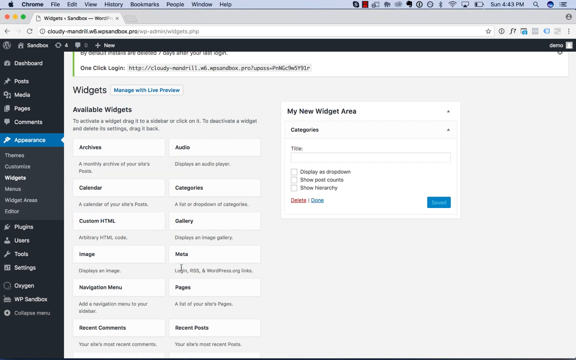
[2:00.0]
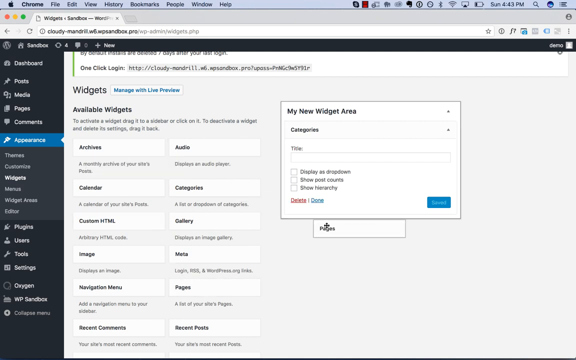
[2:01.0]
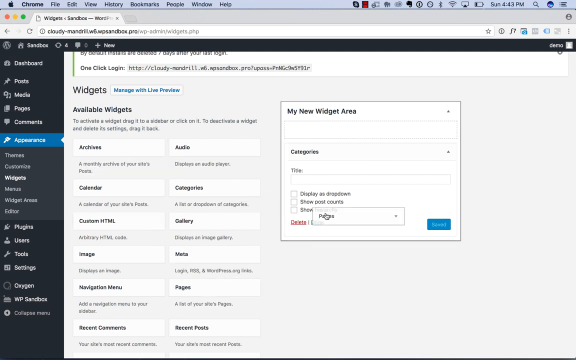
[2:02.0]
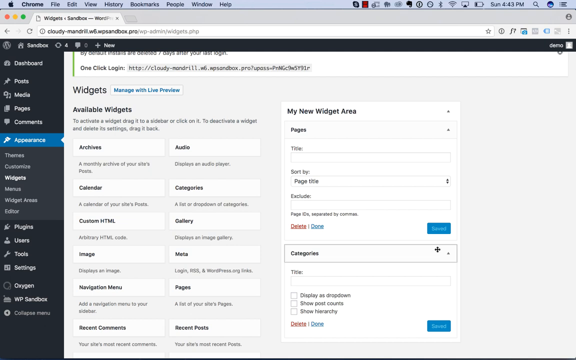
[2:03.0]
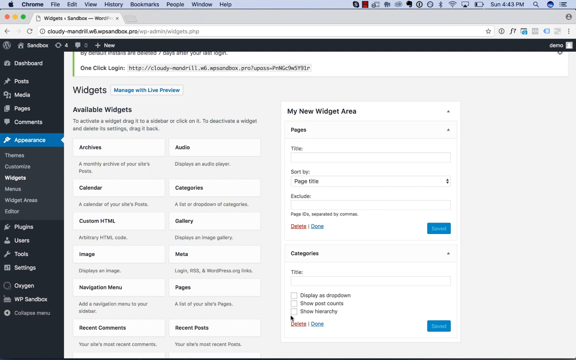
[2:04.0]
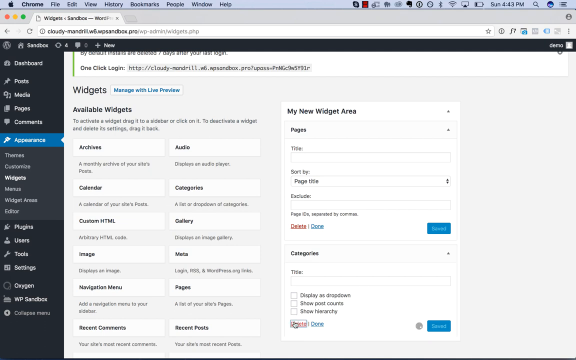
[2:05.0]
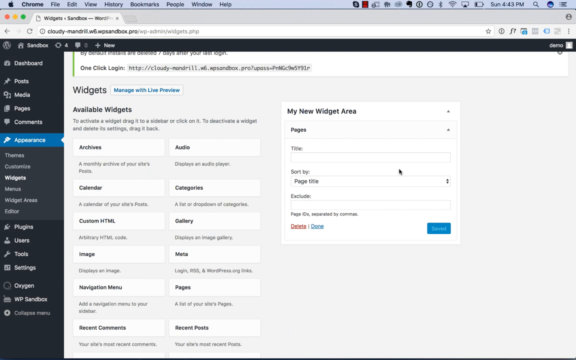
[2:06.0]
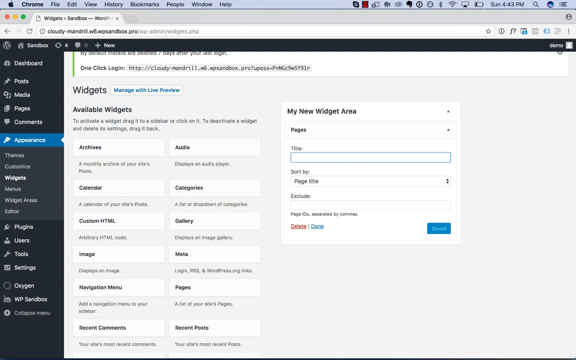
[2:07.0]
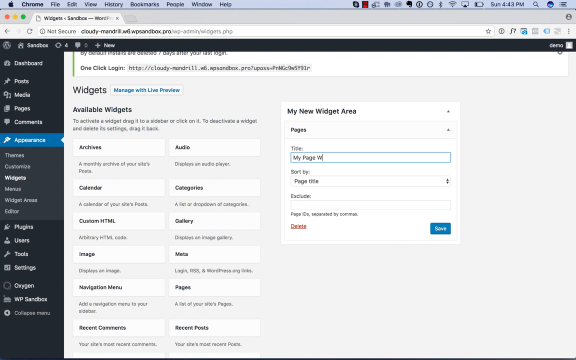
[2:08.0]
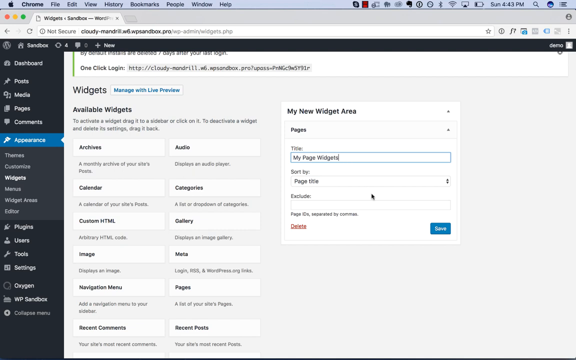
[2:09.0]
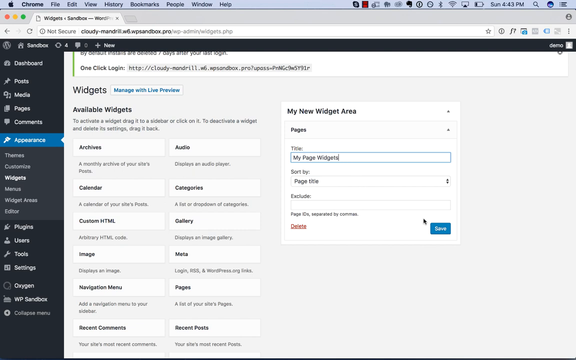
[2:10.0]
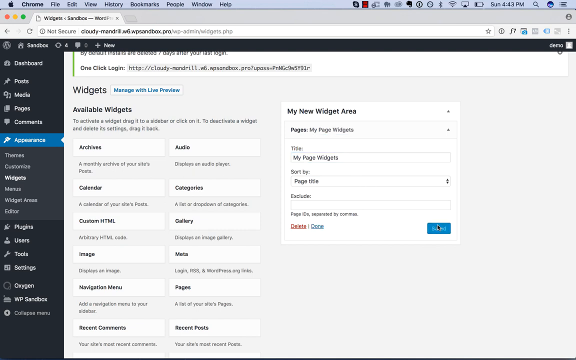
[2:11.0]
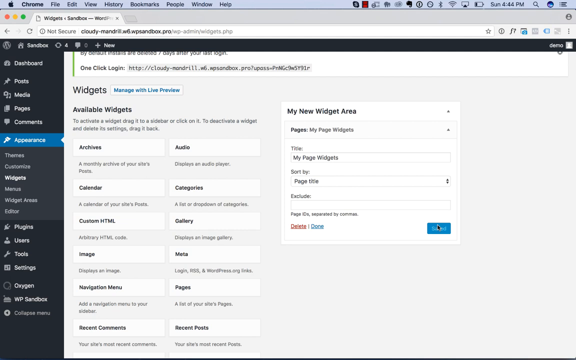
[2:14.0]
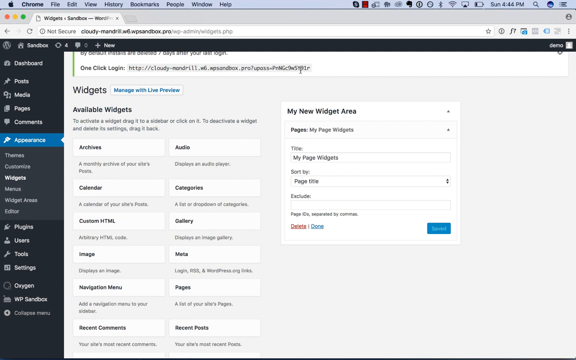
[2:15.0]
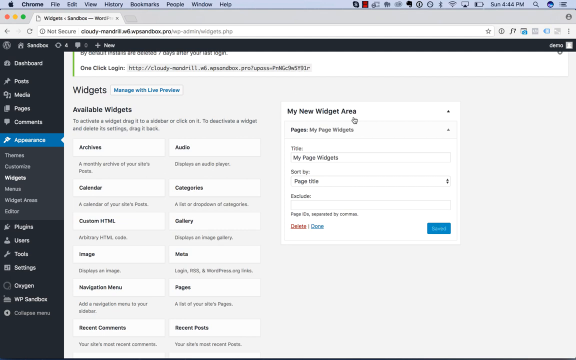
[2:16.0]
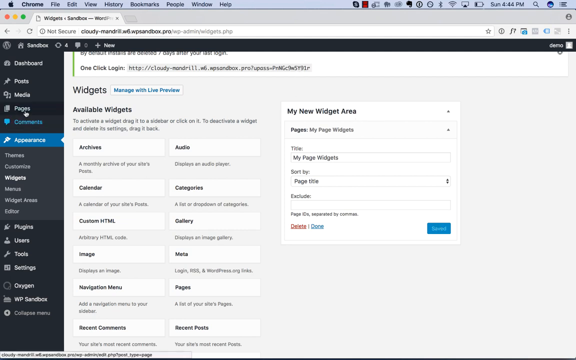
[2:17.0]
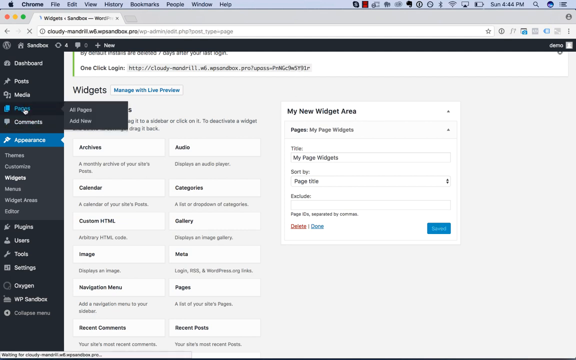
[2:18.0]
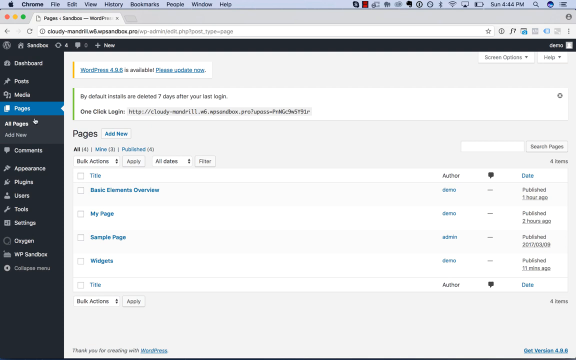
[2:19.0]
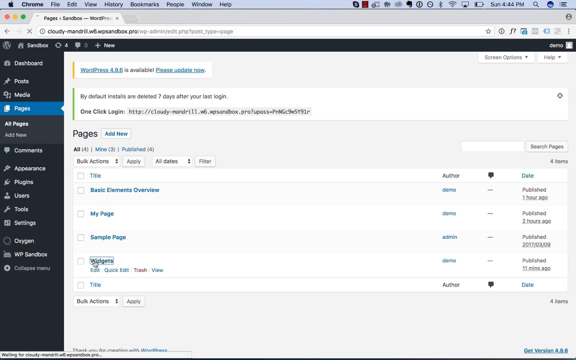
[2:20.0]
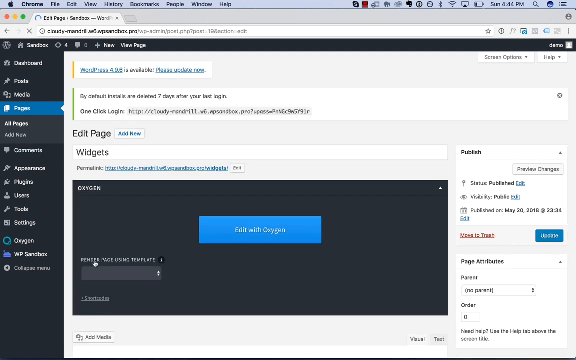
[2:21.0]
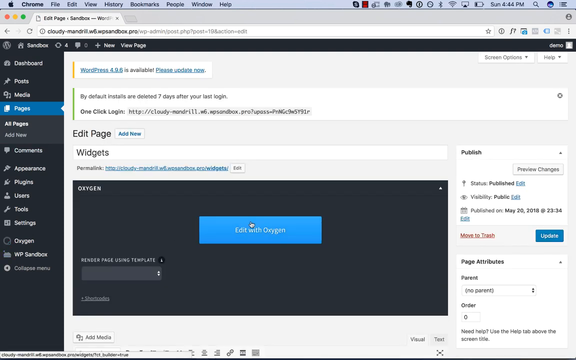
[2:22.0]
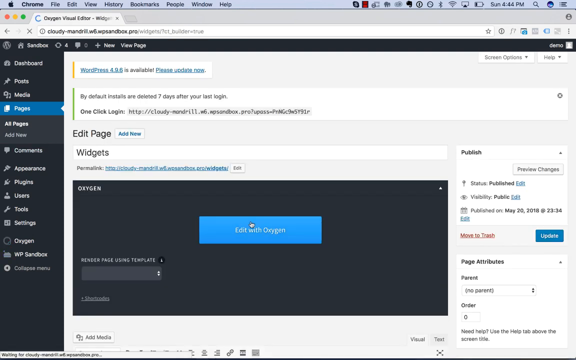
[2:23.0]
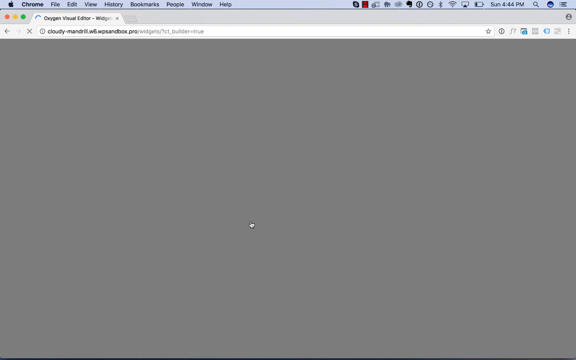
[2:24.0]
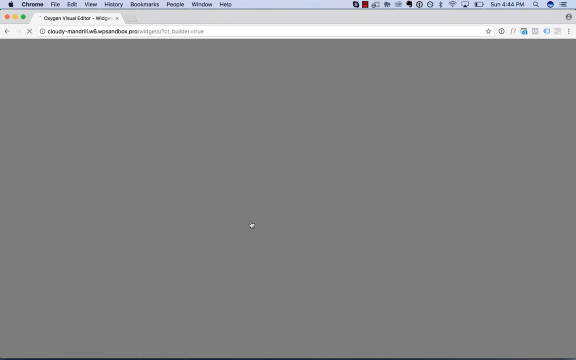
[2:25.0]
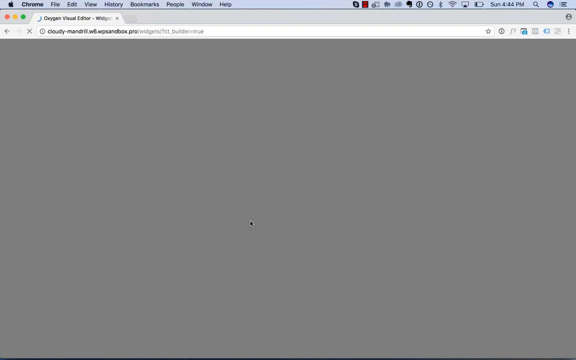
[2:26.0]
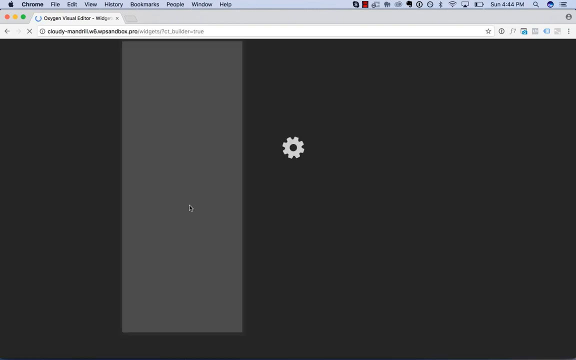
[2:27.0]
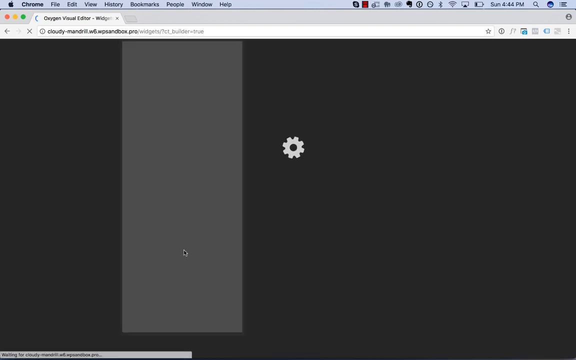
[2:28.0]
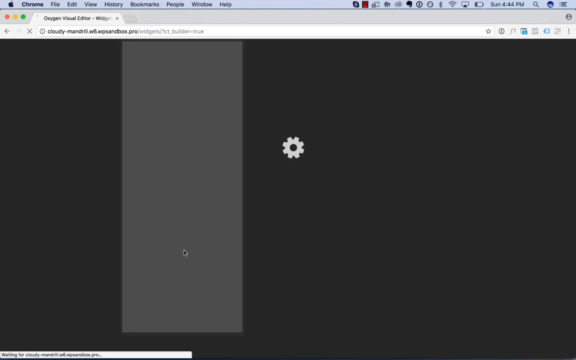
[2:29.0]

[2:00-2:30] A Mac has Chrome open to Oxygen Visual Editor in a browser tab. The user, working with WooSidebars, has made a widget area and is dragging available widgets into it; Categories is already there. They drag in Pages, then delete the first one they added, leaving Pages in the widget area. They title it "my page widgets" and save, so the widget area on the right contains only my page widgets, the Pages widget they just added. They move the mouse around, go back to pages, and on the edit page a blue "edit with Oxygen" button appears in the right middle. They click it, and Oxygen Visual Editor takes some time to load the page.